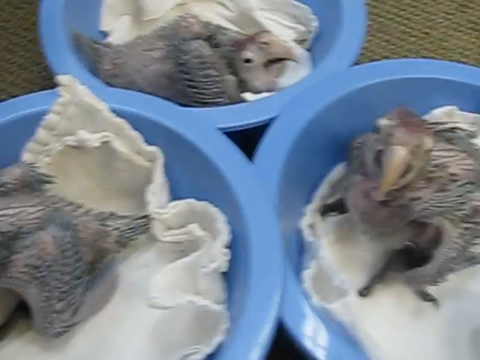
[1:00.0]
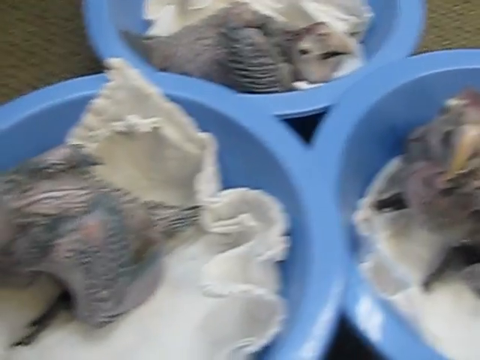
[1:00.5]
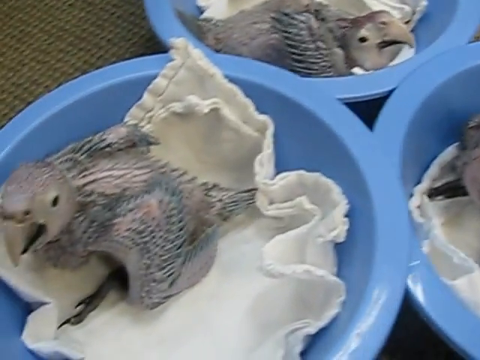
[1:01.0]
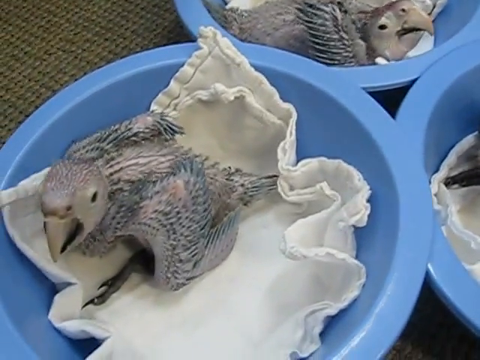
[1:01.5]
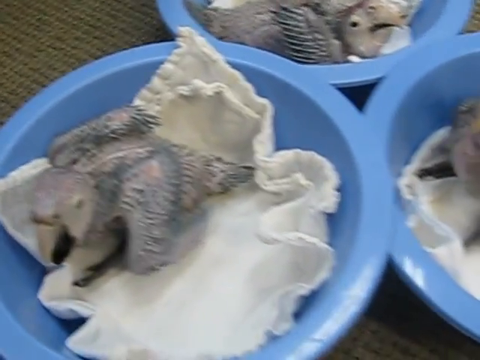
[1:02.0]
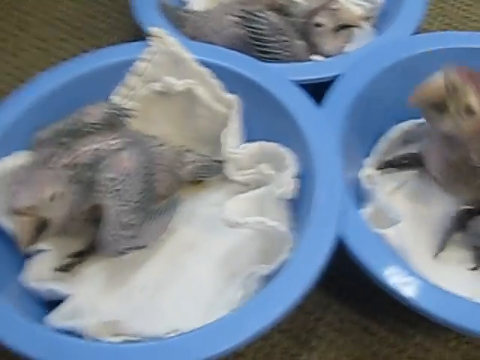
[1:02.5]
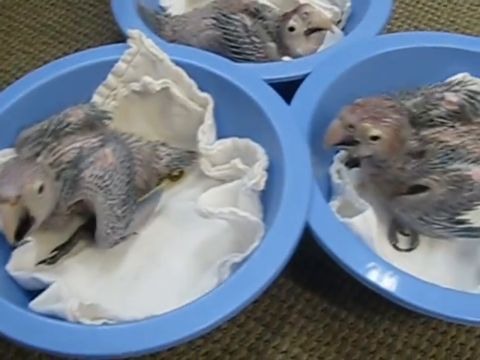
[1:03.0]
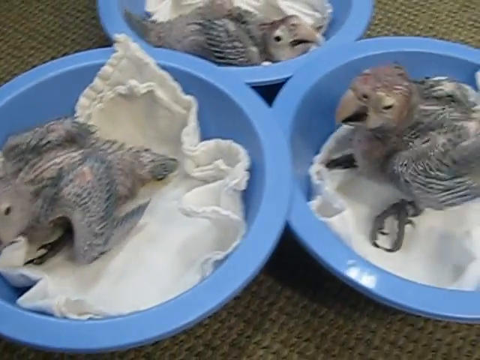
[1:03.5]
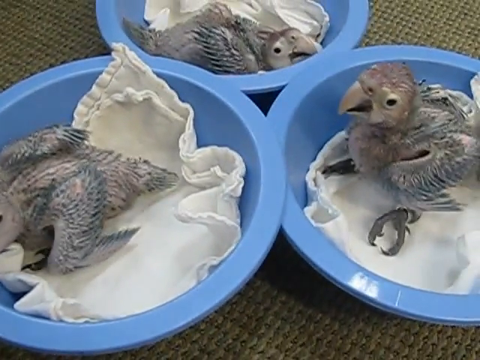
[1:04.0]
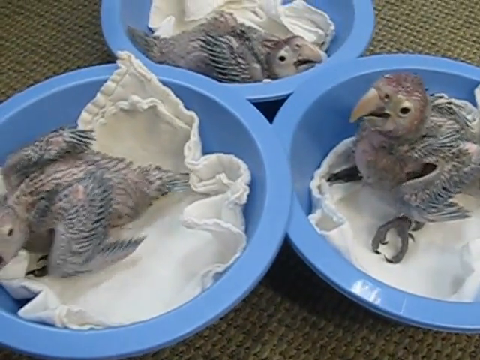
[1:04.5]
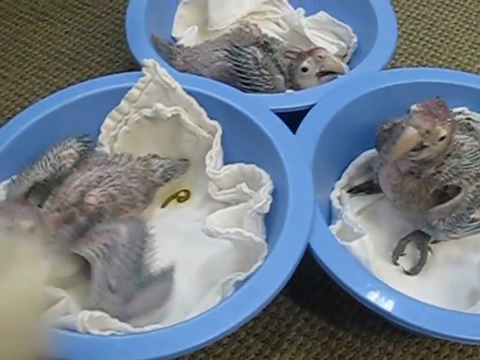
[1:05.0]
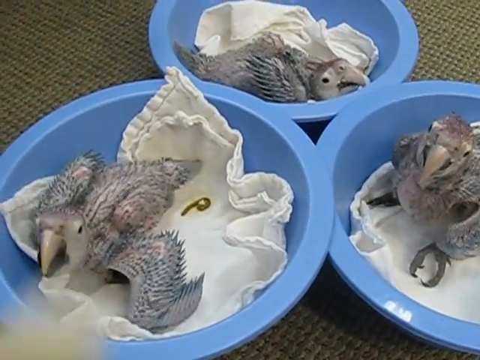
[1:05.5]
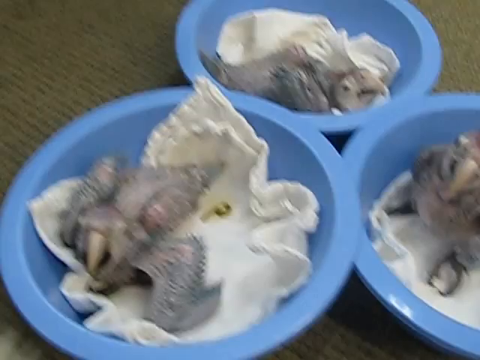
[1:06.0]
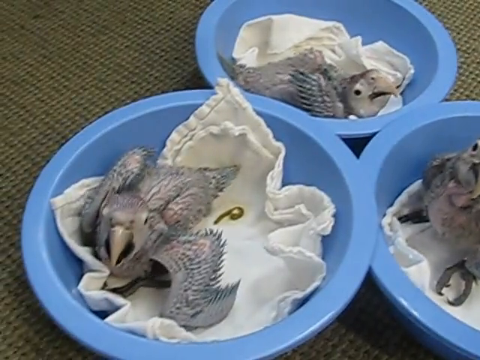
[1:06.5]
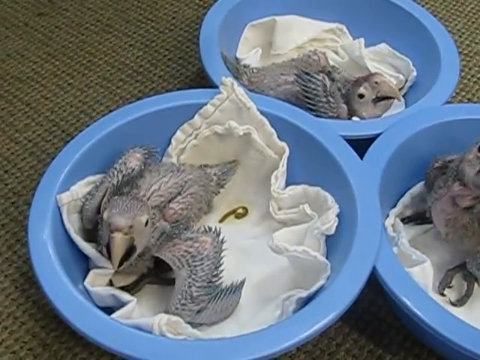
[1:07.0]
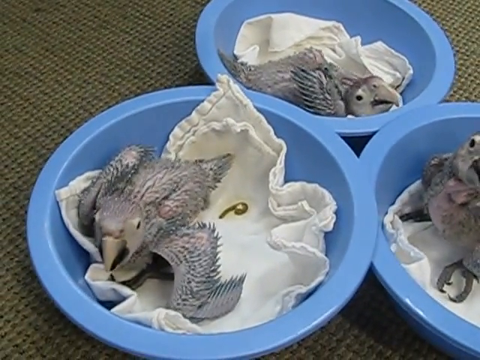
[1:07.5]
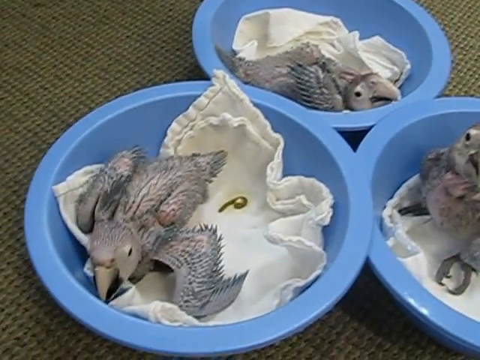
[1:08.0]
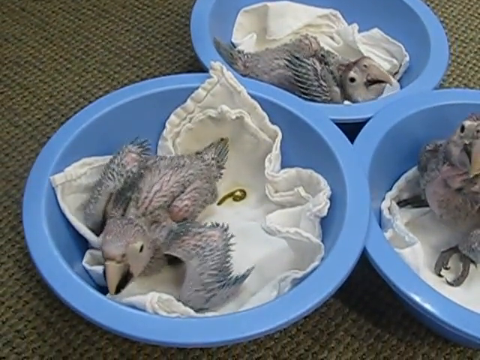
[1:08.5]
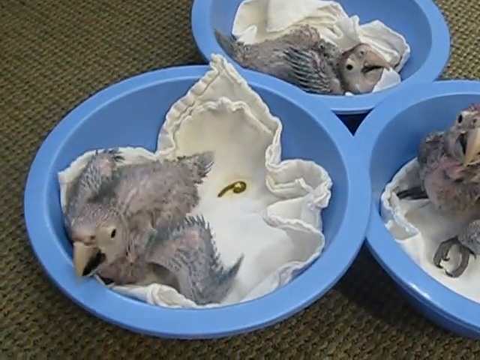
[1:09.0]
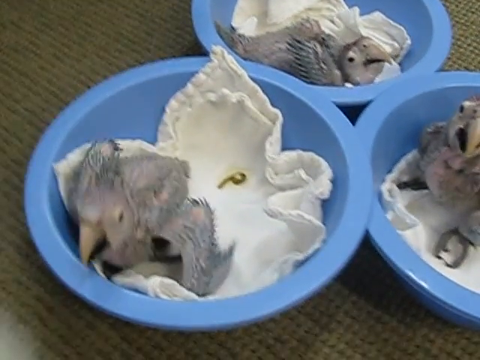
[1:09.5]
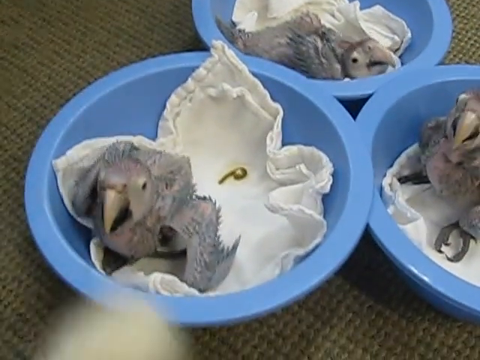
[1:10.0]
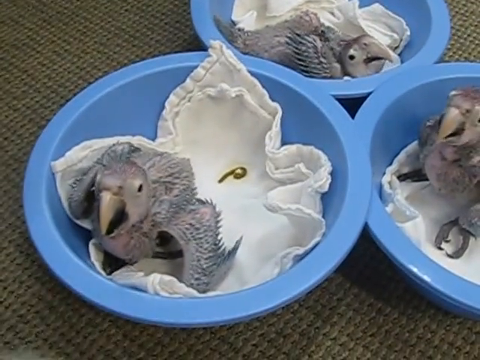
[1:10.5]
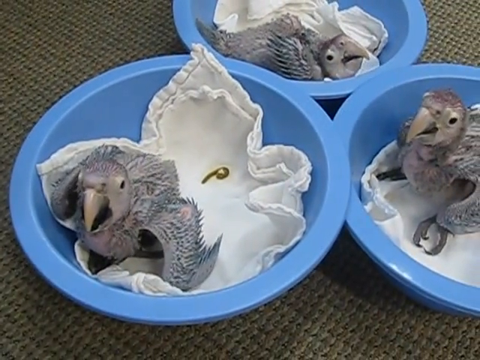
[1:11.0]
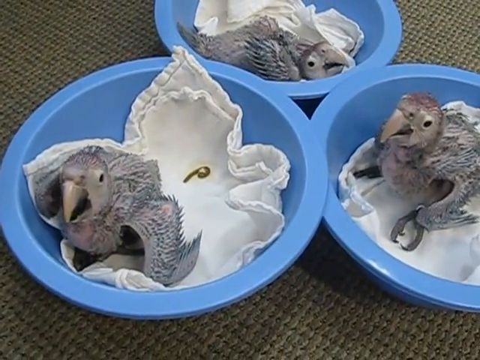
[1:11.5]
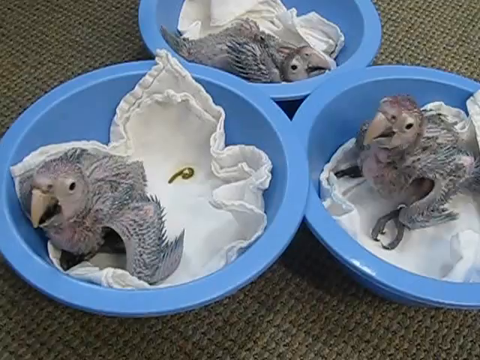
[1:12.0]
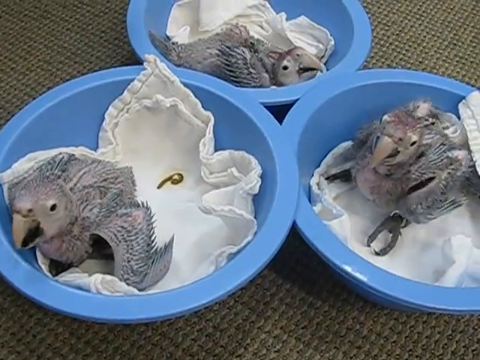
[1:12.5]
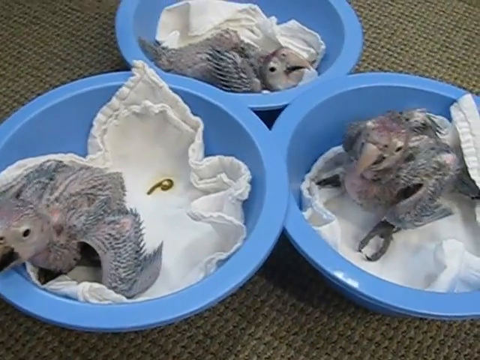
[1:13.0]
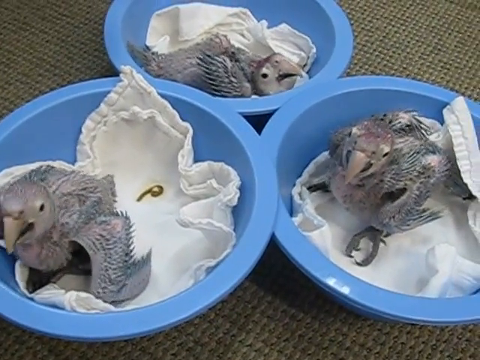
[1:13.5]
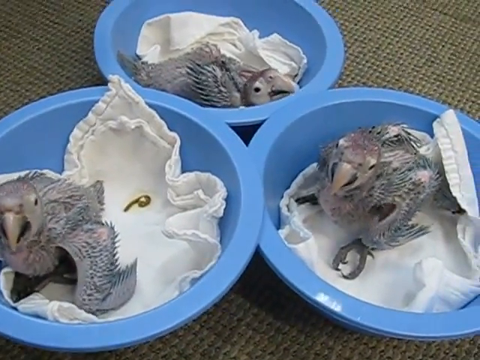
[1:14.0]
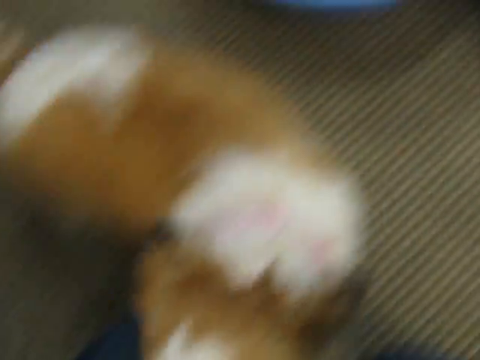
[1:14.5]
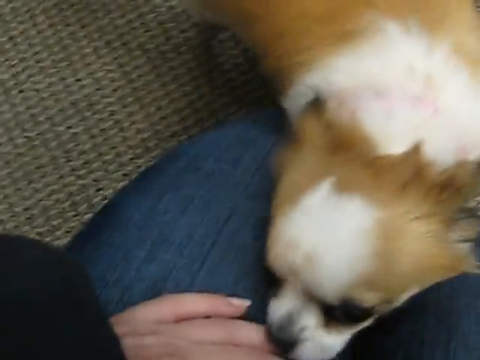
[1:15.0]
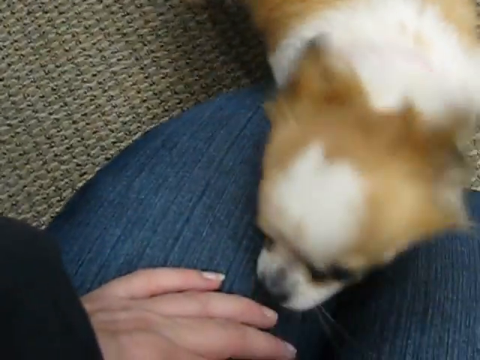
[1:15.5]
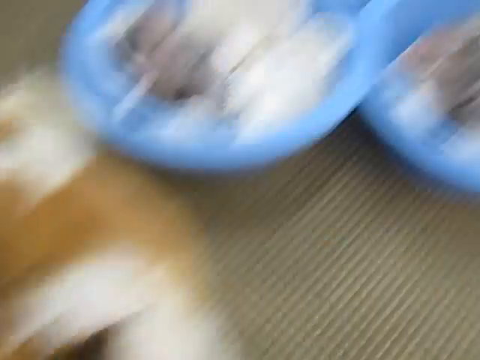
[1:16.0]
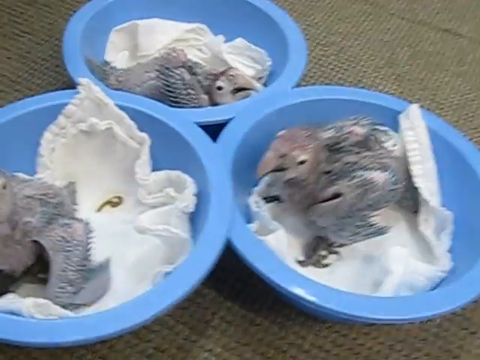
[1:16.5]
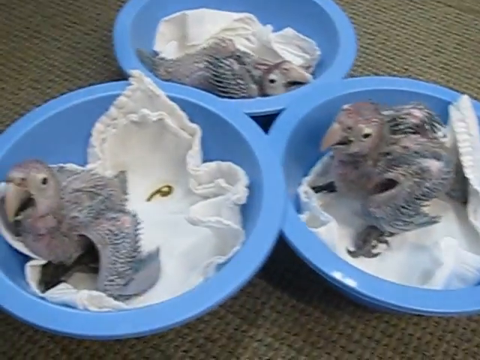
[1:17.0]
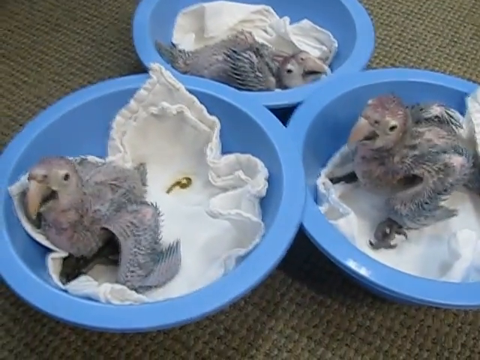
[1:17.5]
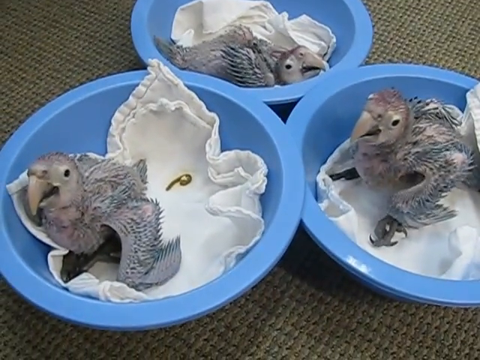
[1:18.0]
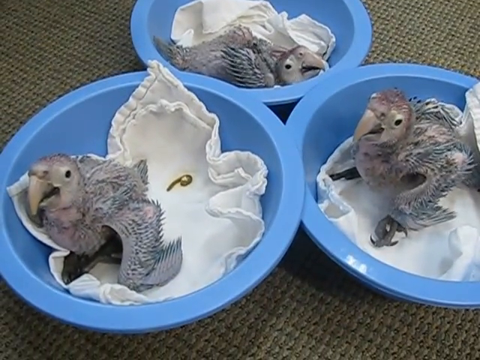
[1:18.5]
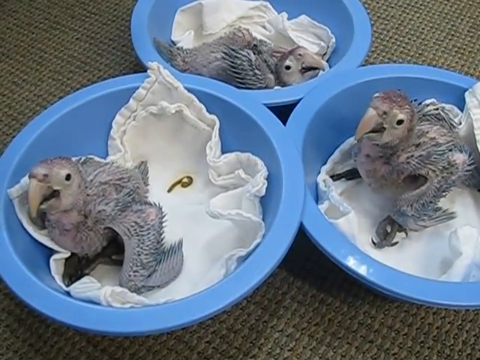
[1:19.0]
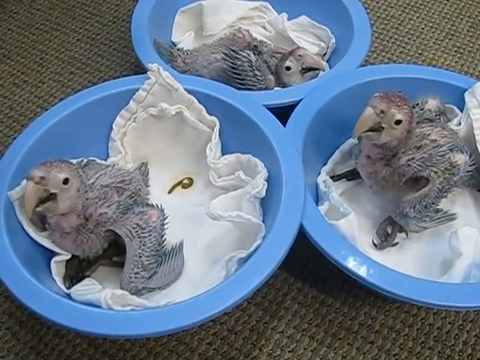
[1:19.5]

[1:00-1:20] The brown rug on the floor has the three blue buckets sitting on top of it, and the camera is above the buckets, showing them from above. It then moves to the left, focusing on the bird on the left, which seems to be opening its beak a bit, showing its black inside; its black legs are also visible. The camera zooms out a bit, and the bird on the left opens up its wings, revealing that it has defecated on the white cloth, leaving a green spot. The bird gets closer to the edge of the bucket as the person seems to be passing a finger or something close to it. The camera then turns and reveals a white and brown dog with the person; the thing passing close to the bird was actually the dog's tail, wiggling. Every one of the birds is now concentrated on looking at the dog, and even the one on the right has got up and is standing while looking at it.